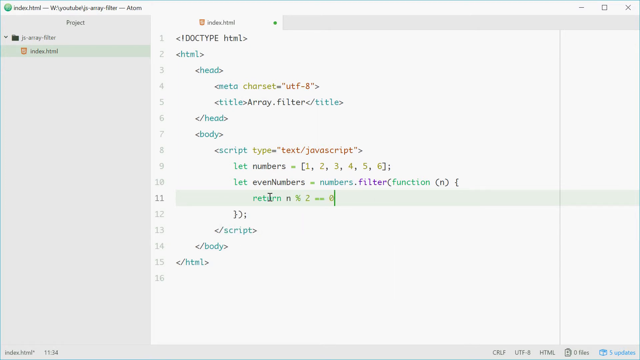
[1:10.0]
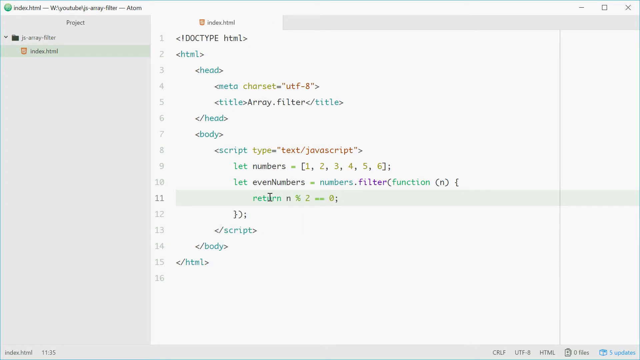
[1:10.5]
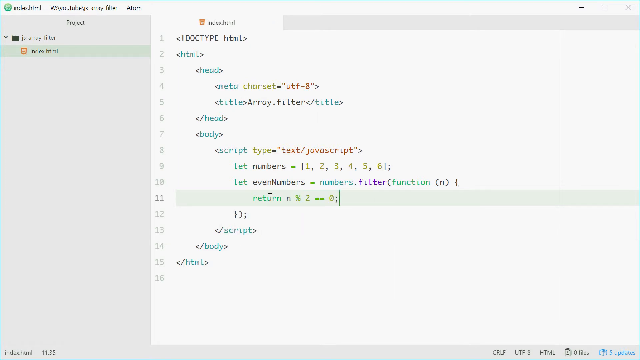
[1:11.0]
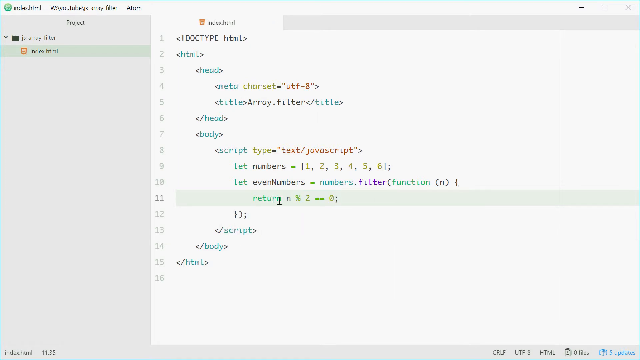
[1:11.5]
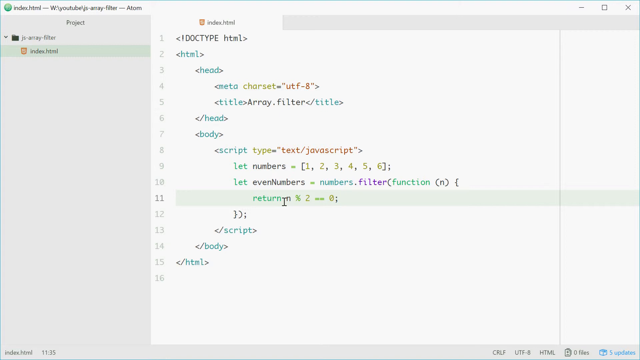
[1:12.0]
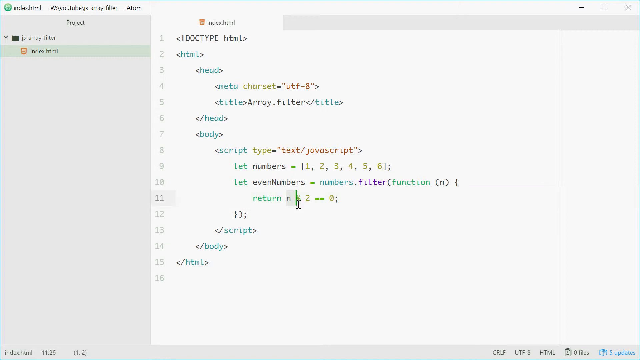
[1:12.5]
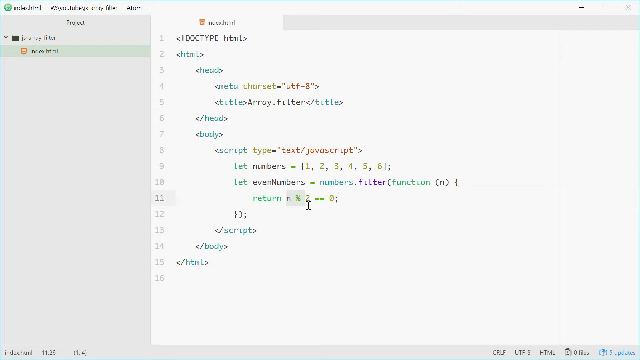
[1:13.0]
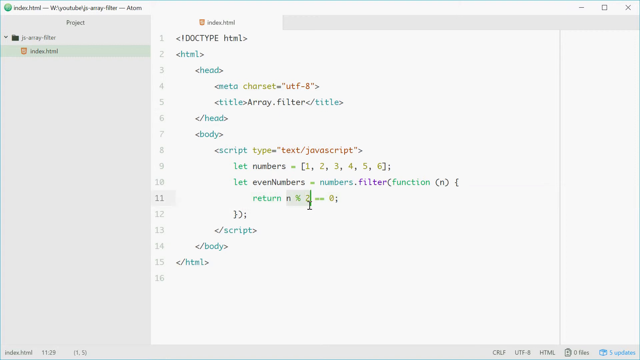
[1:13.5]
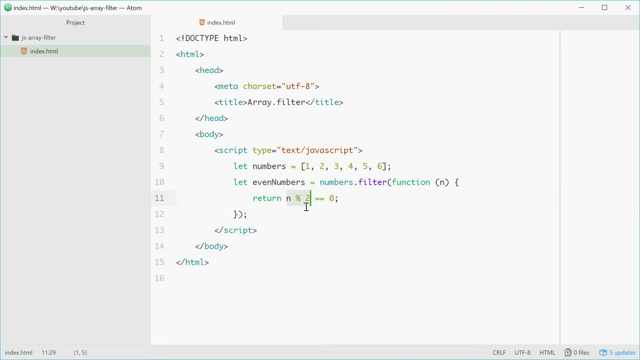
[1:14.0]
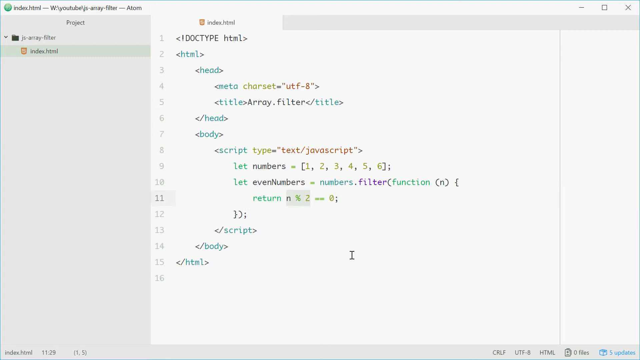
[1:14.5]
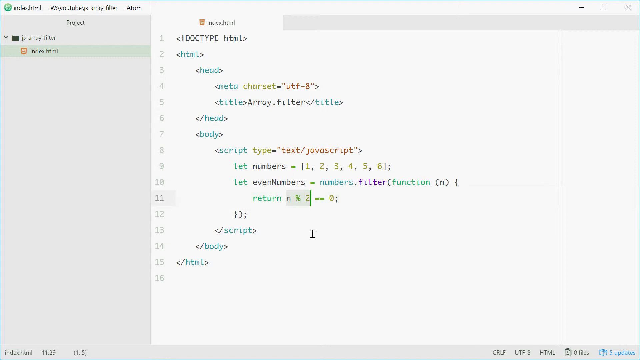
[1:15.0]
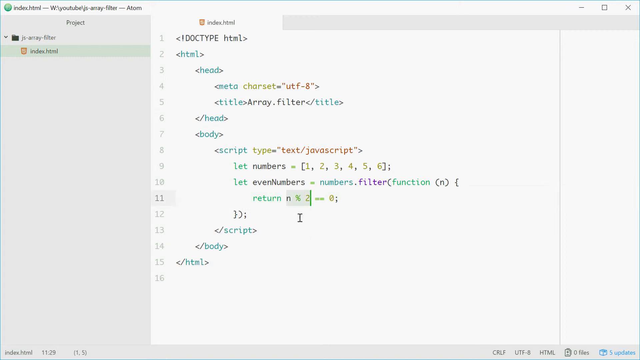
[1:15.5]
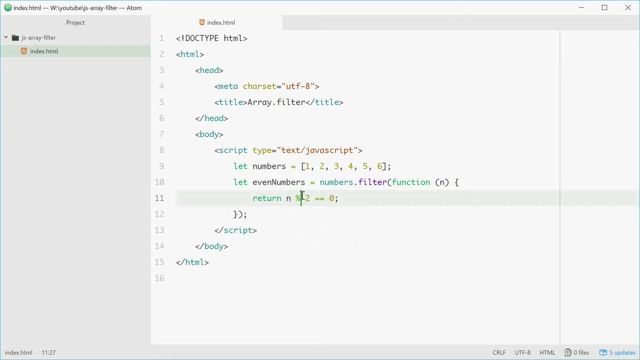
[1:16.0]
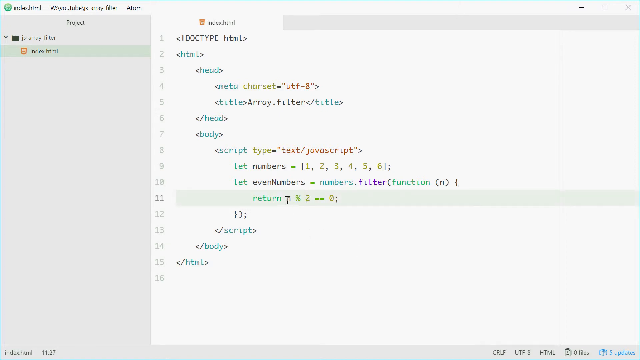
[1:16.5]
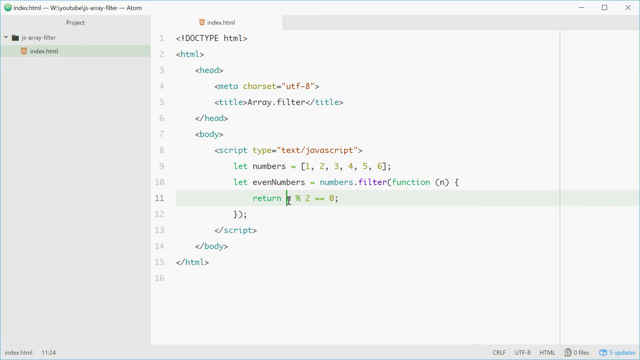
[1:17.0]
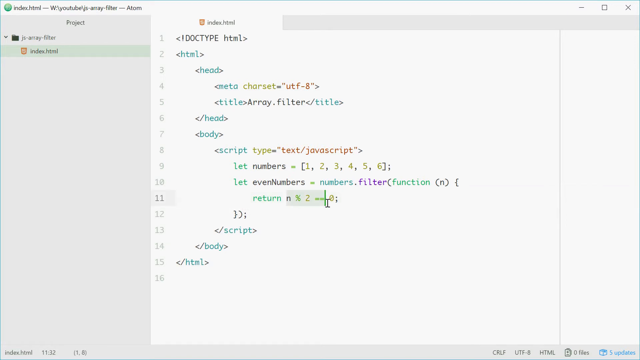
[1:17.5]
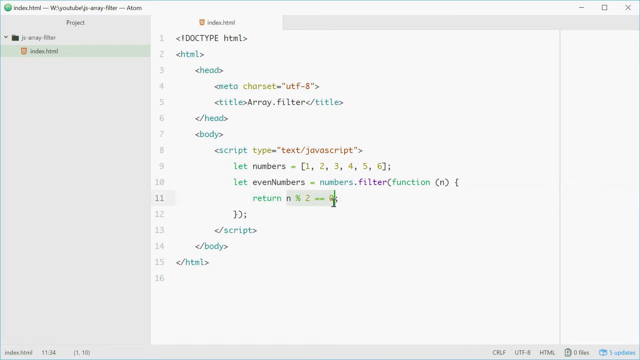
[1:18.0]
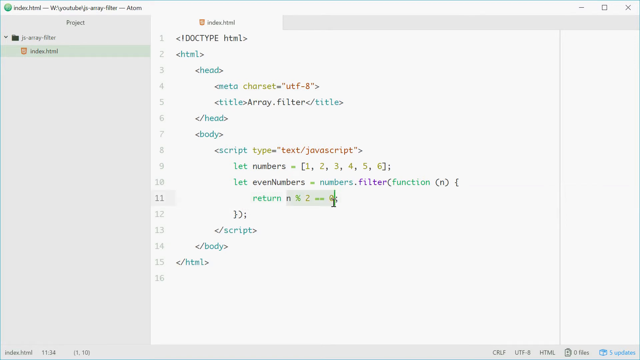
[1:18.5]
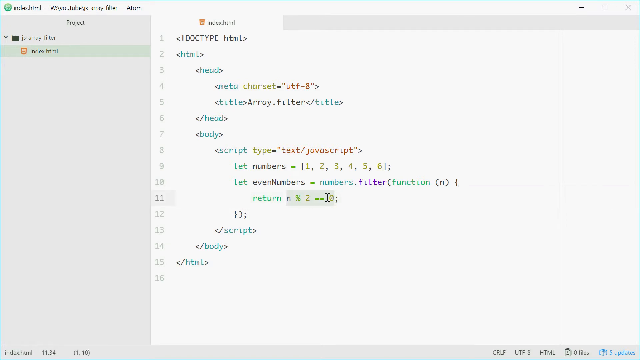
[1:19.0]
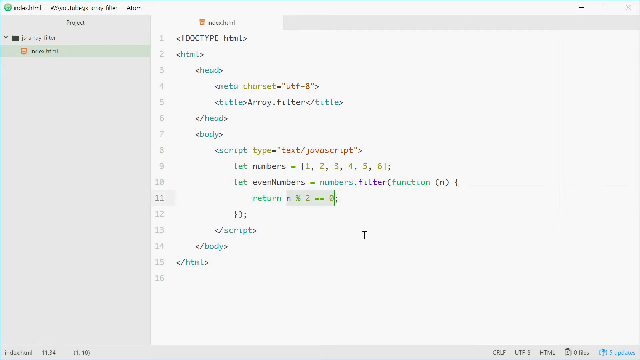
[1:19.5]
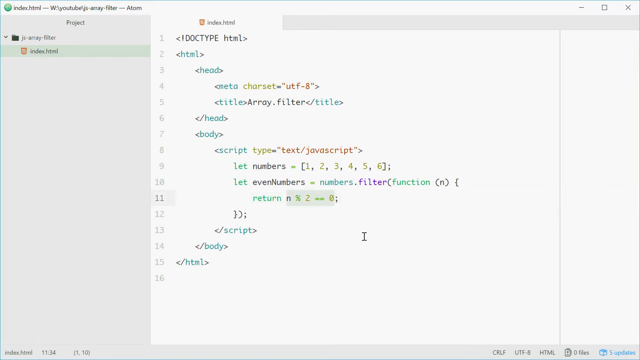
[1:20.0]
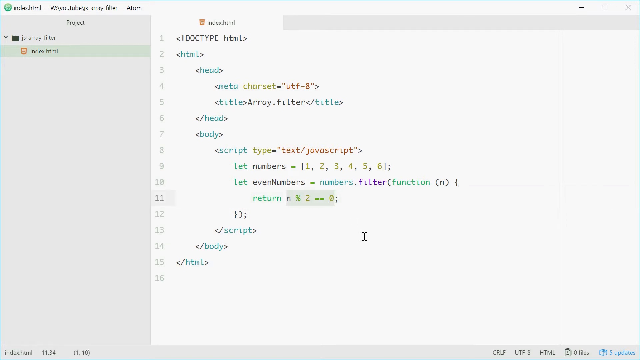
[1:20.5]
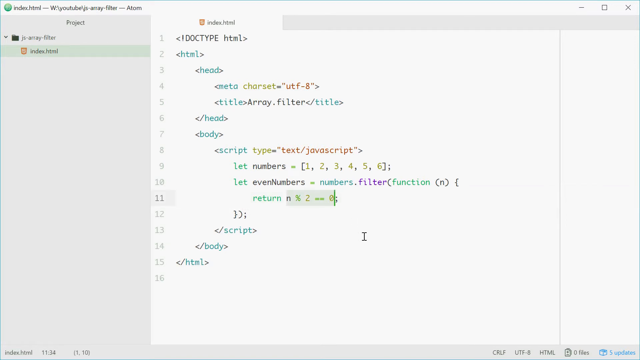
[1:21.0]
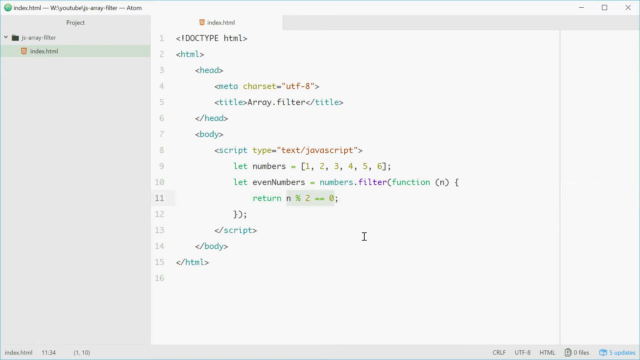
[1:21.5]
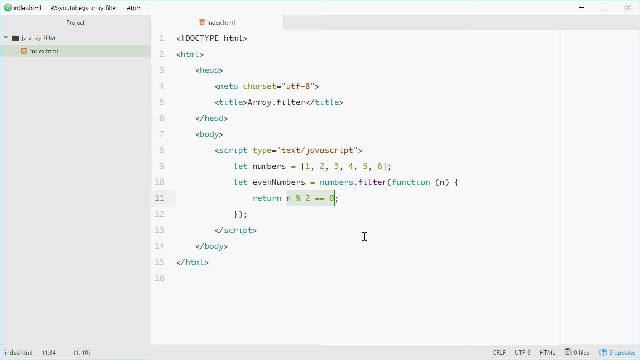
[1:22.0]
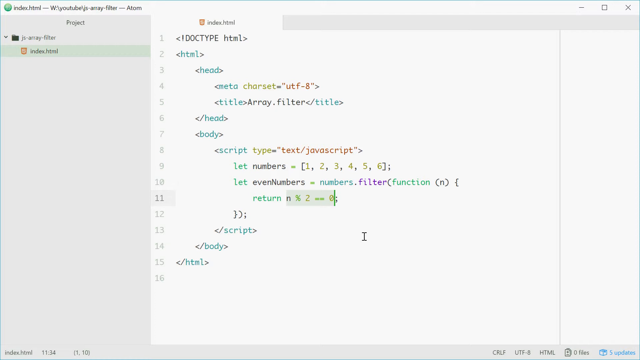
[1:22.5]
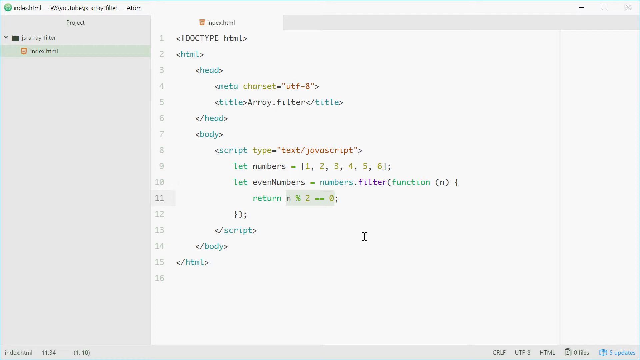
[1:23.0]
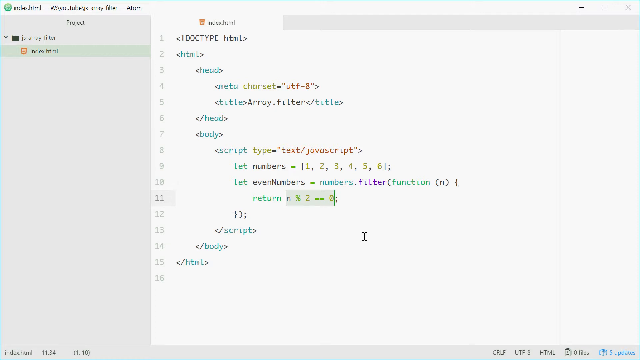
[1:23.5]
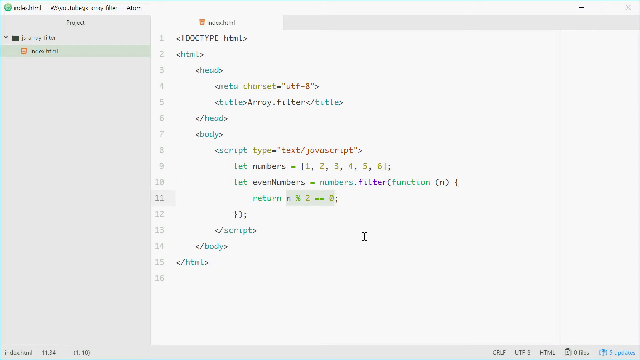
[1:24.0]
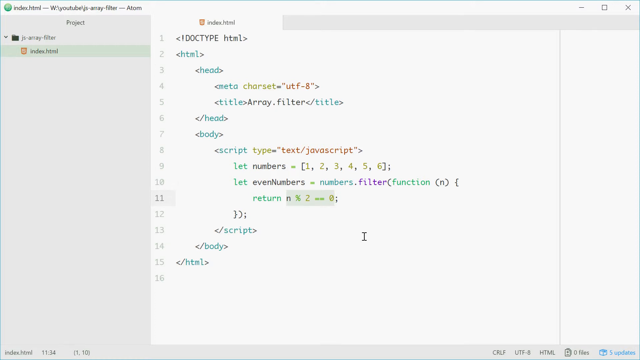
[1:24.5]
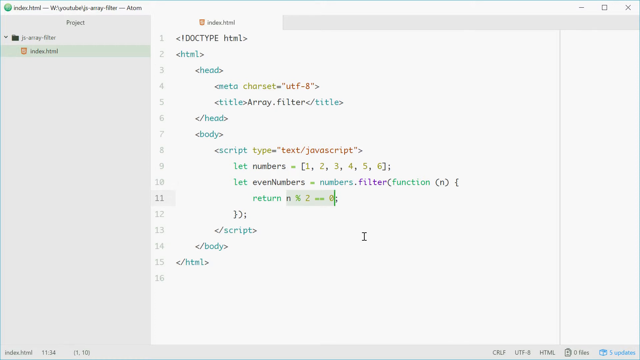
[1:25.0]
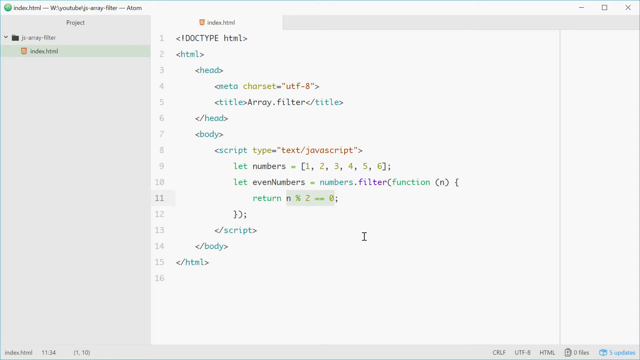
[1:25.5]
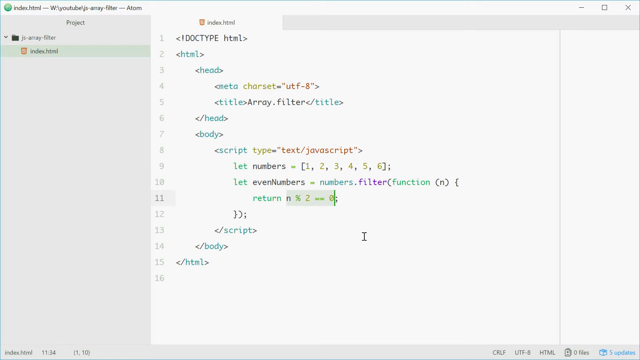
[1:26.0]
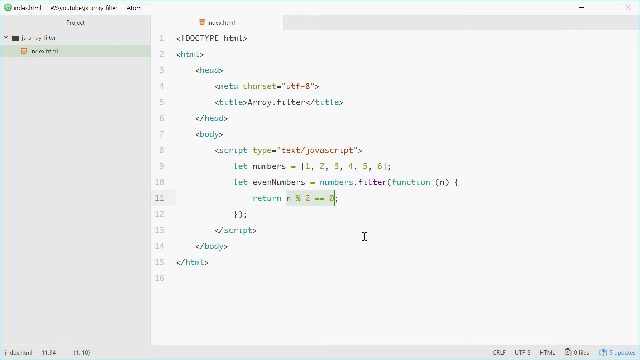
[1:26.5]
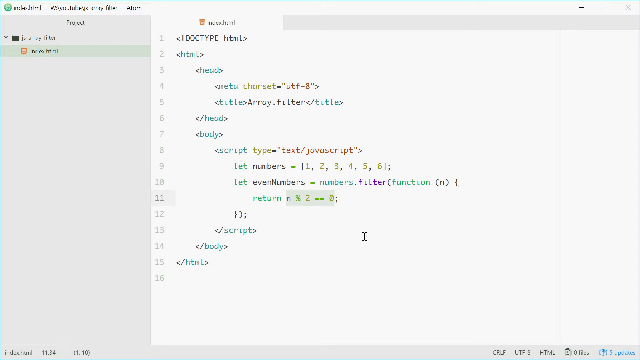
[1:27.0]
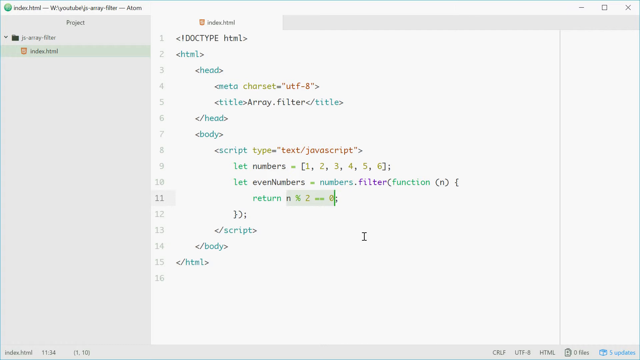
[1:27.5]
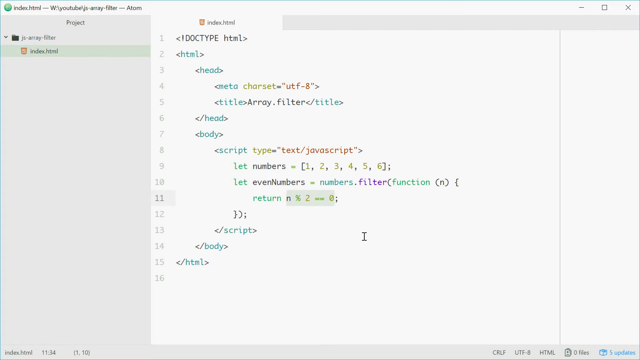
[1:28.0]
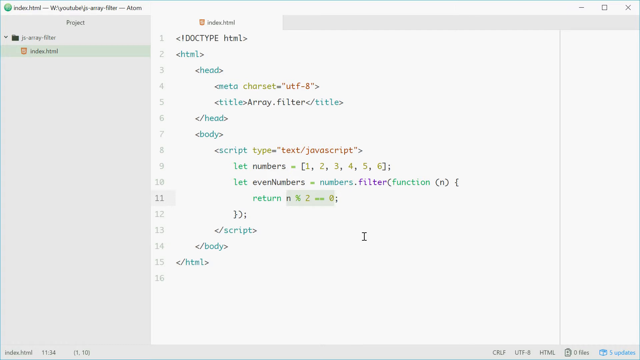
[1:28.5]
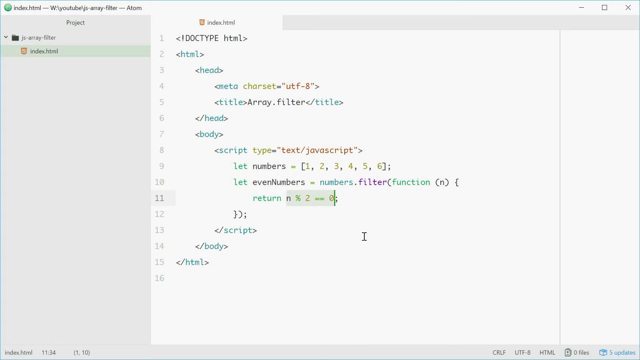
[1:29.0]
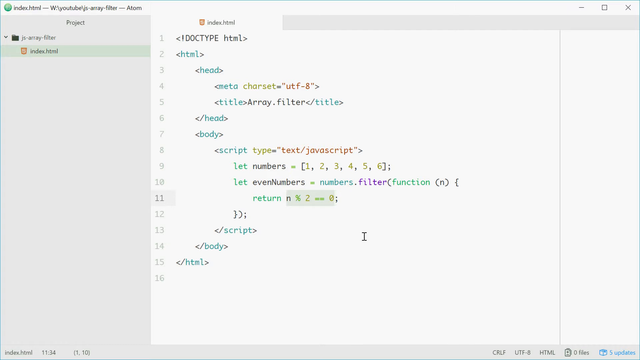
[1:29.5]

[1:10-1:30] The person finishes line 11, which reads "return n % 2 == 0;". The word "return" is blue, n is black, and the percent symbol is green. The person first highlights the three characters from n to the percent sign, unhighlights them, then highlights again from n to the yellow 0, leaving the semicolon unhighlighted, and keeps it highlighted as the shot cuts off. On the left side there is a navigation bar showing the project: under the project is a folder labeled "js array filter", and below it is index.html.